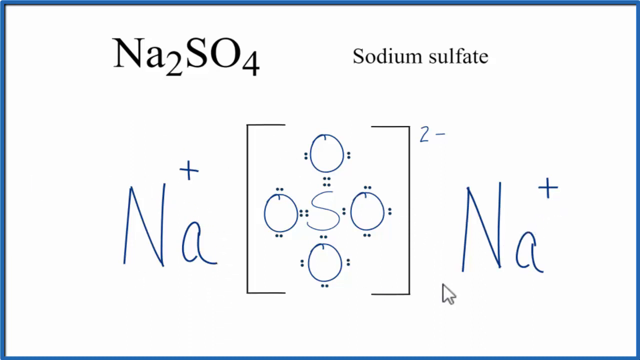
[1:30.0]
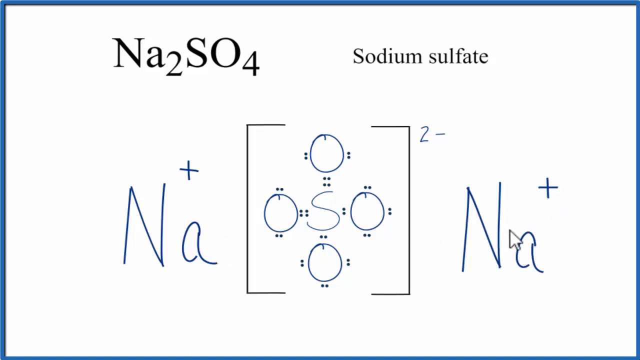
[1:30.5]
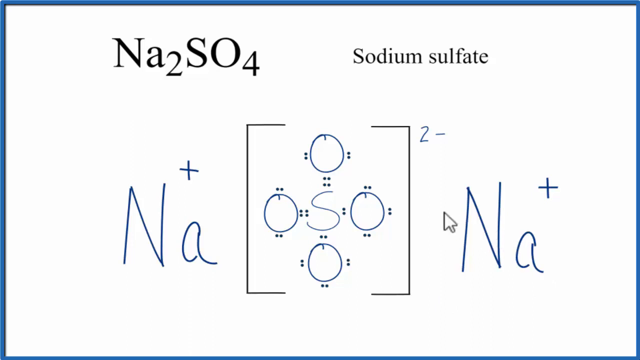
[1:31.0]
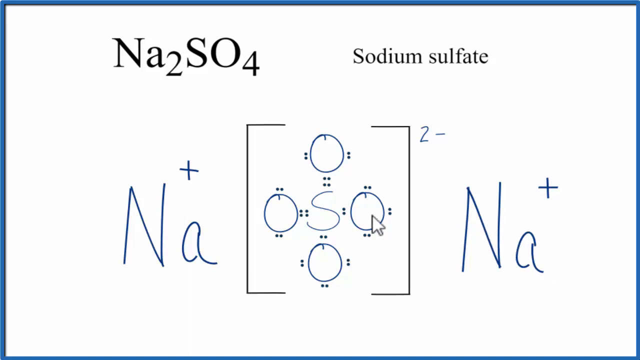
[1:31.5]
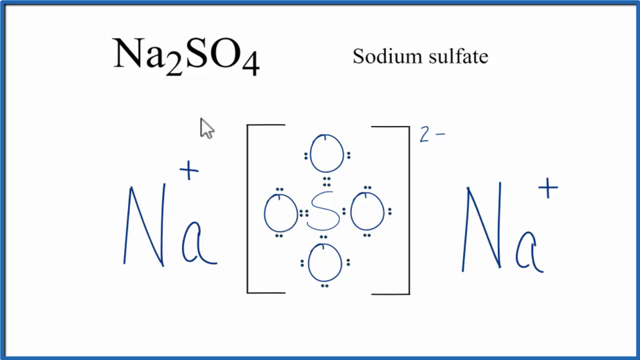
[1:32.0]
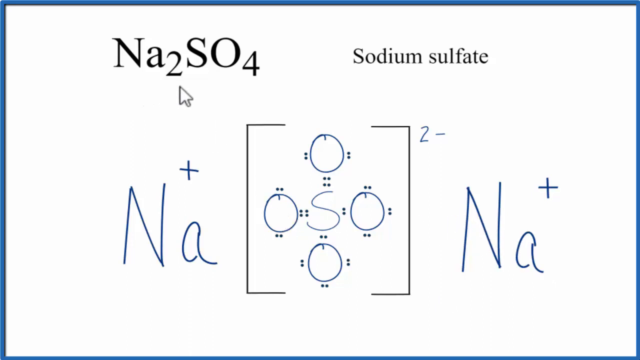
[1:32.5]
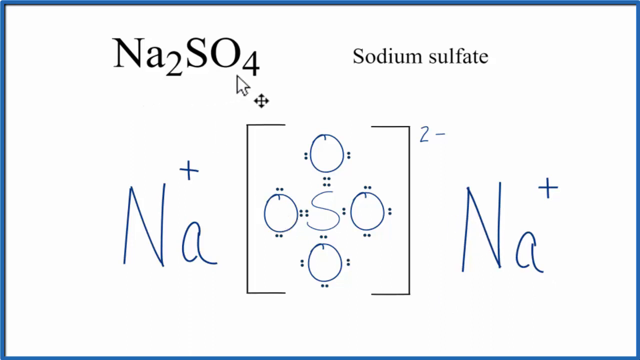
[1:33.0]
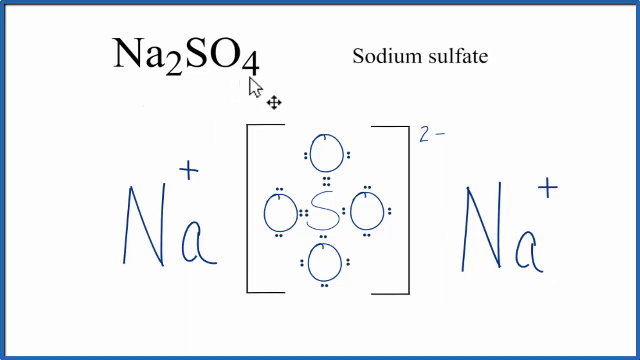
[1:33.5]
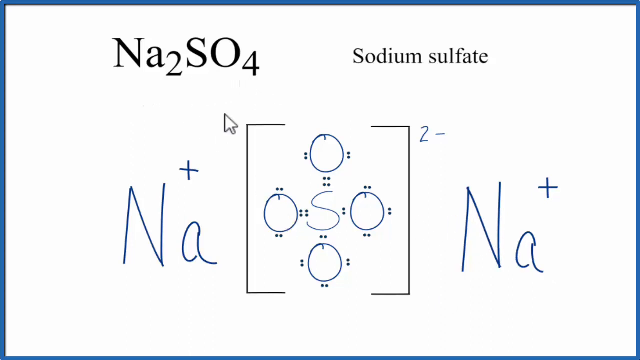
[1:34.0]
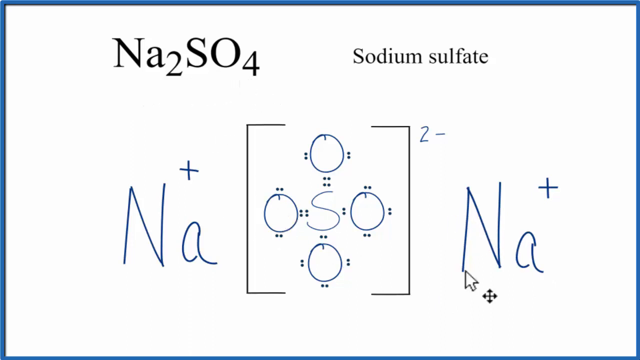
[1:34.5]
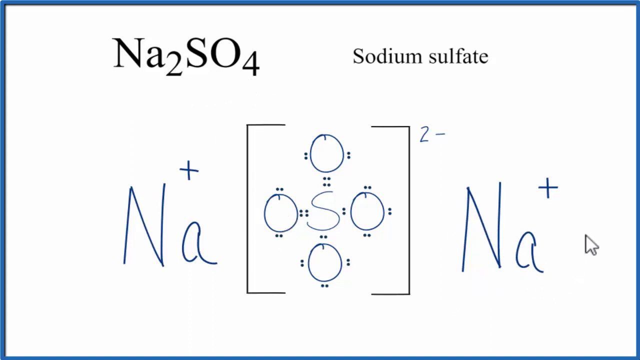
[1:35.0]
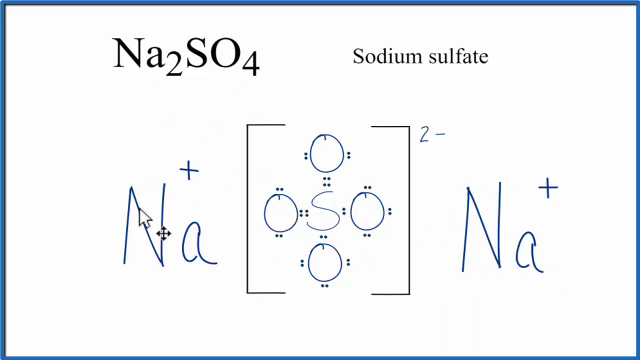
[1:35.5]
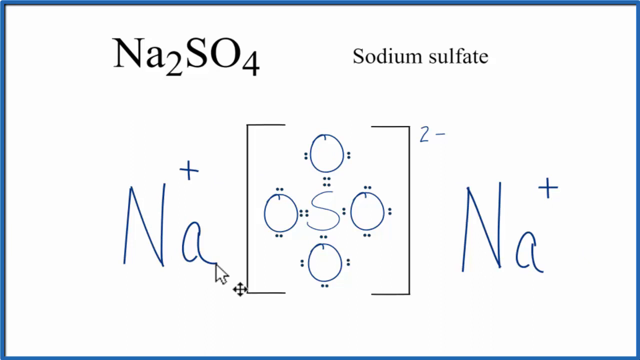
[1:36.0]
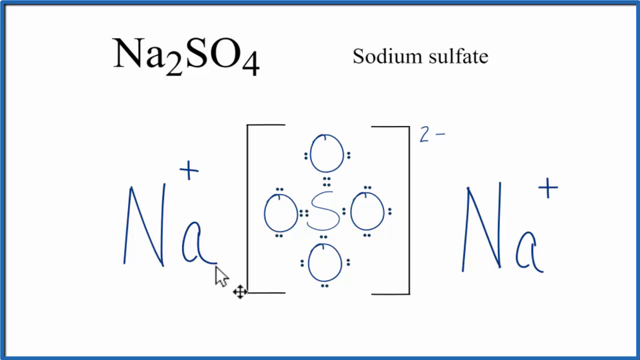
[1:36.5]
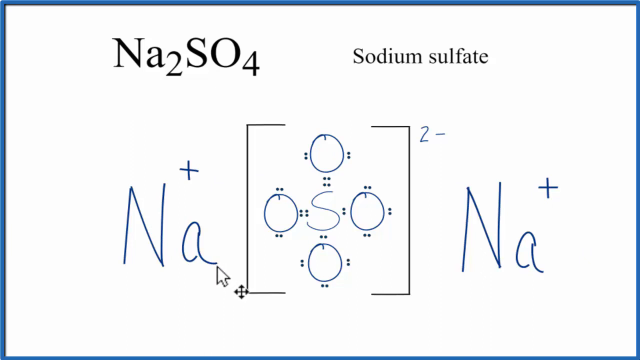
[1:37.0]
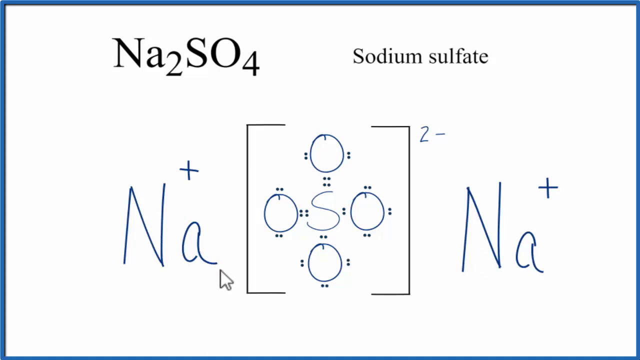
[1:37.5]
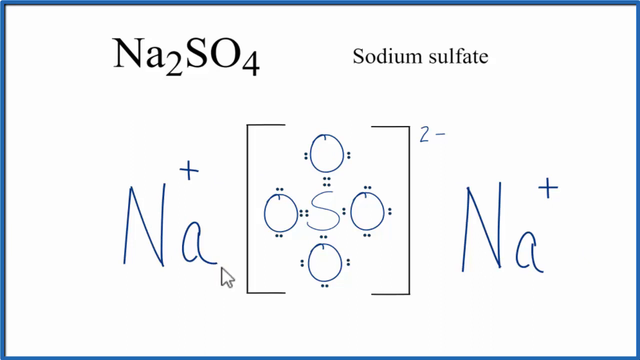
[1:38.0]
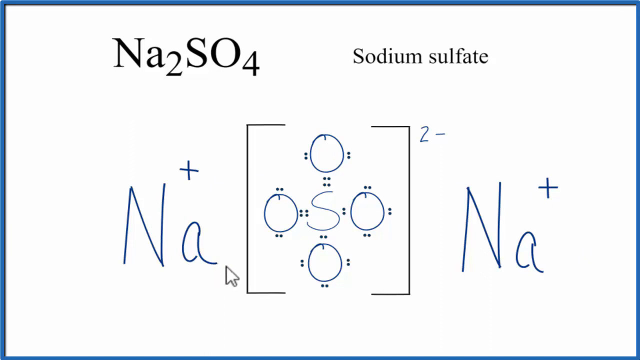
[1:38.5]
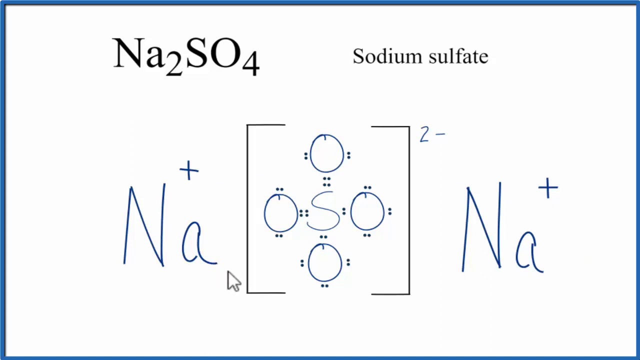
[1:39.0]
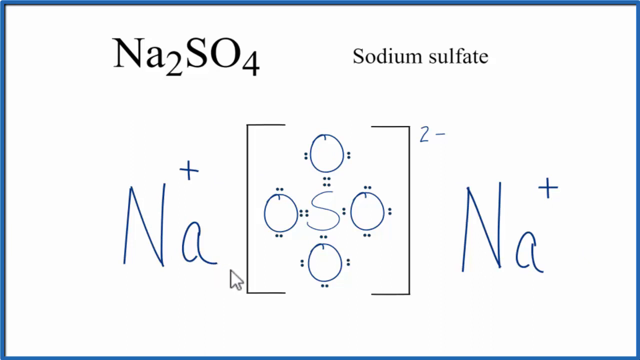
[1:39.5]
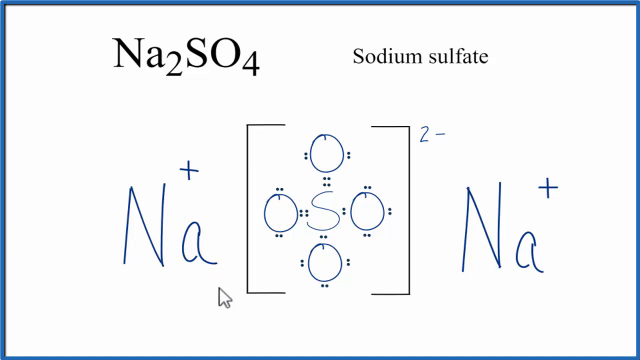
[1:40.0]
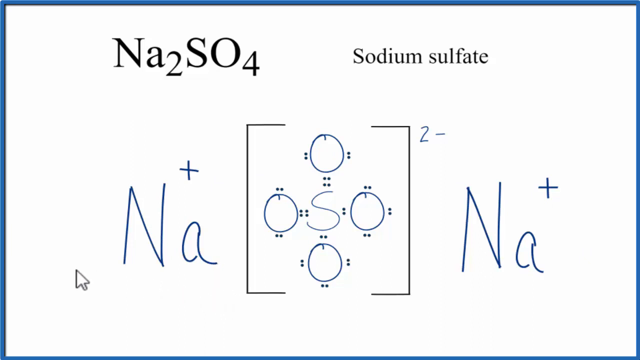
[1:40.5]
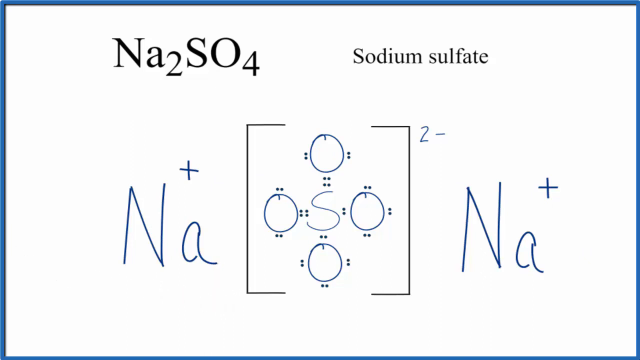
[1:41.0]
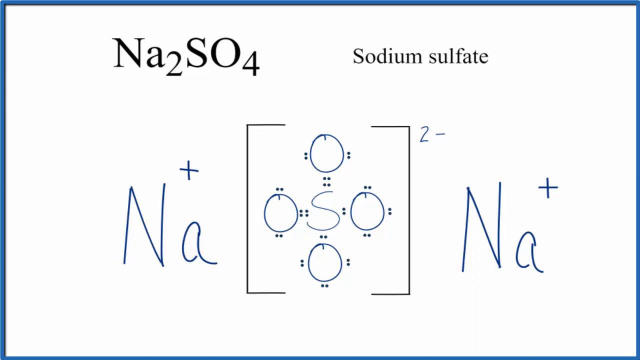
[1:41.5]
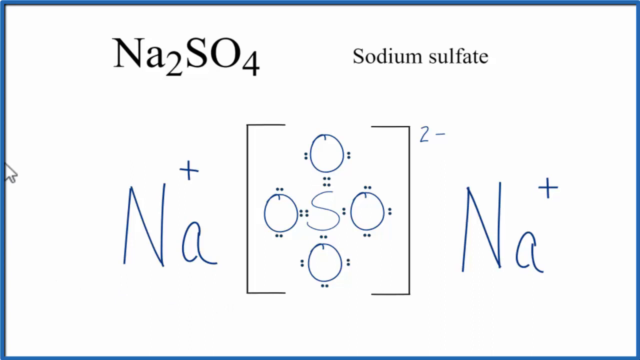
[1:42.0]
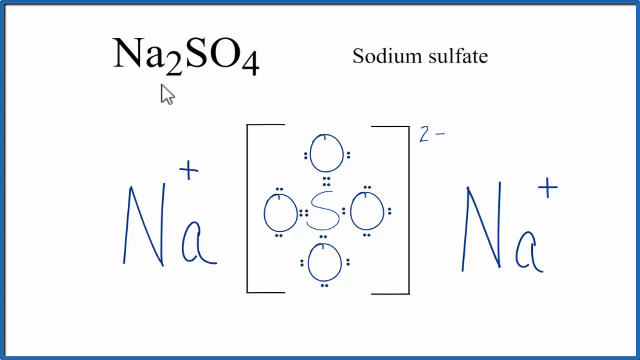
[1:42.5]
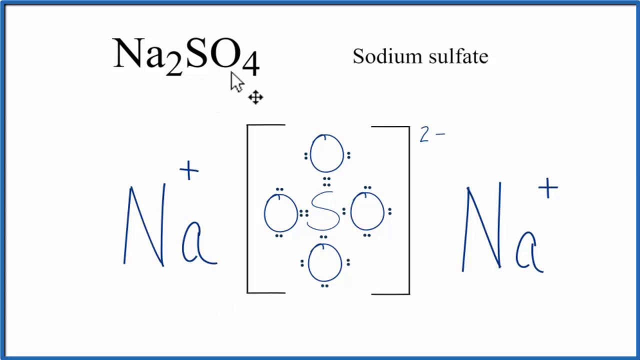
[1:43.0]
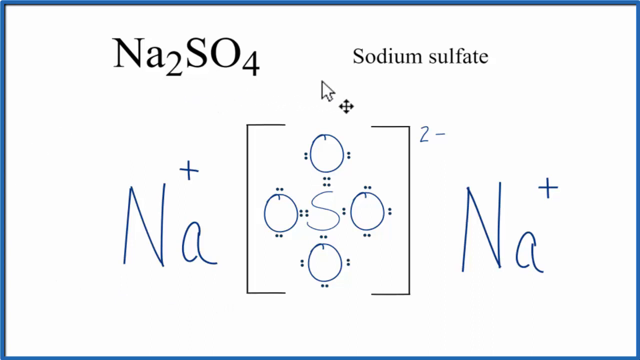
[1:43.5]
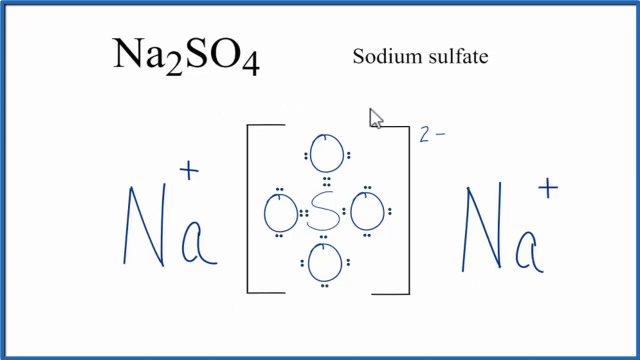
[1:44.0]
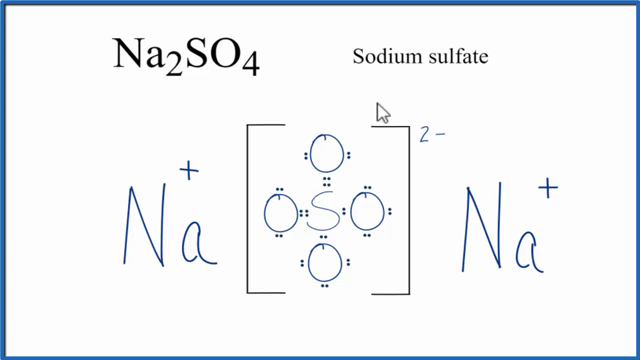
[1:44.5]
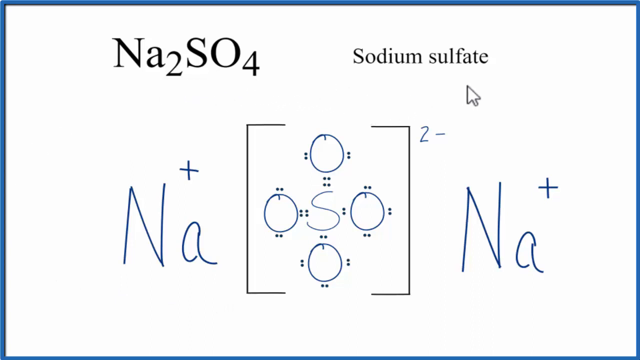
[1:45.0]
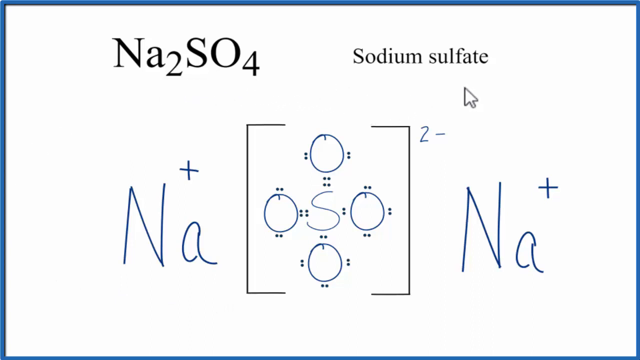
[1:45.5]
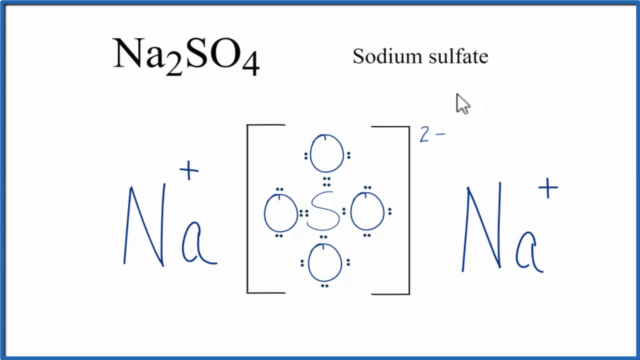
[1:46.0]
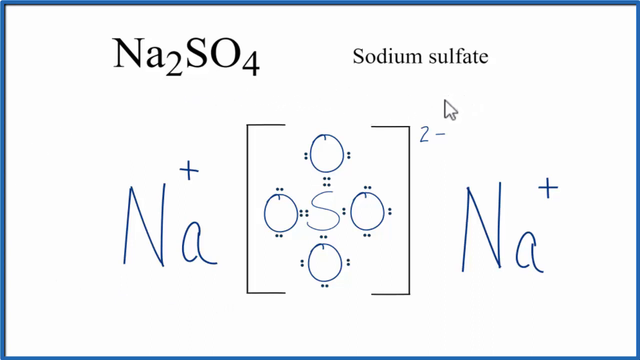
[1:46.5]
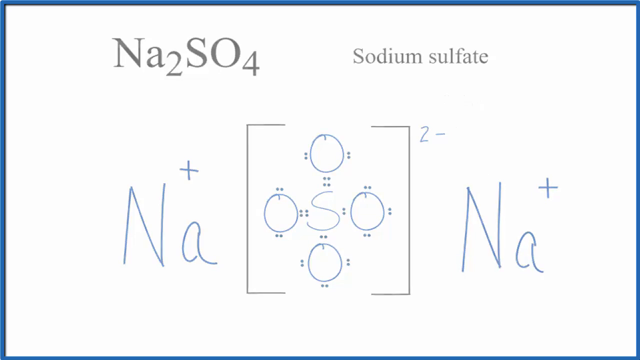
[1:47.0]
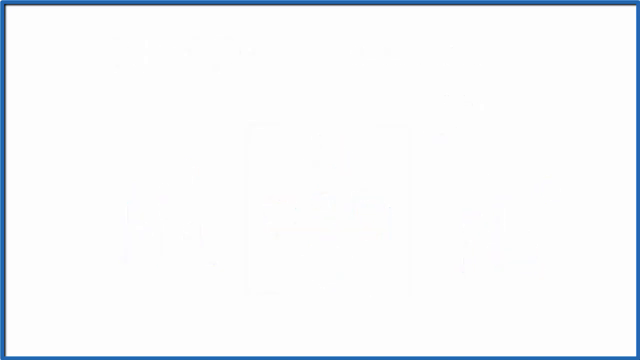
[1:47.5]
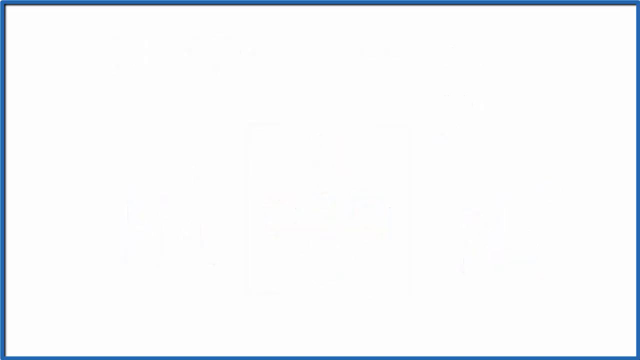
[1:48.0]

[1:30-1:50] The drawn Na ions and the Lewis diagram of the sulfate ion remain on screen as the presenter apparently explains how the ions of sodium sulfate cancel out. As the video ends, everything fades to white.